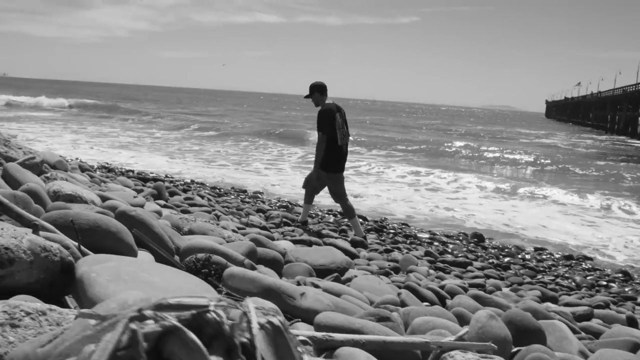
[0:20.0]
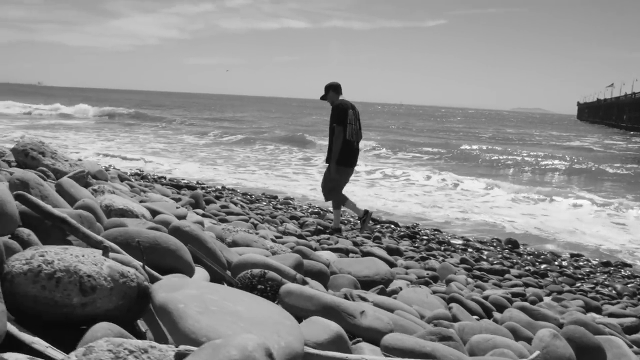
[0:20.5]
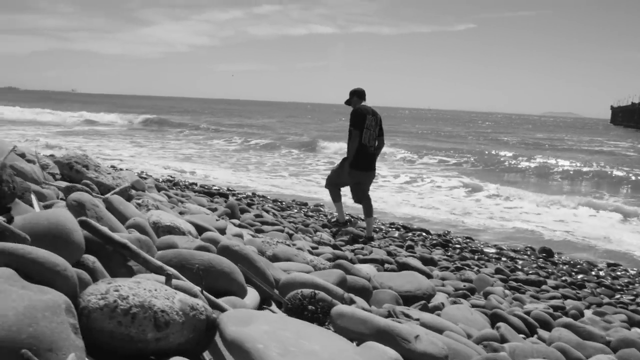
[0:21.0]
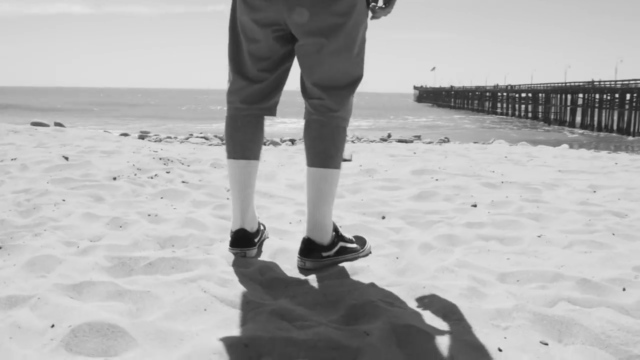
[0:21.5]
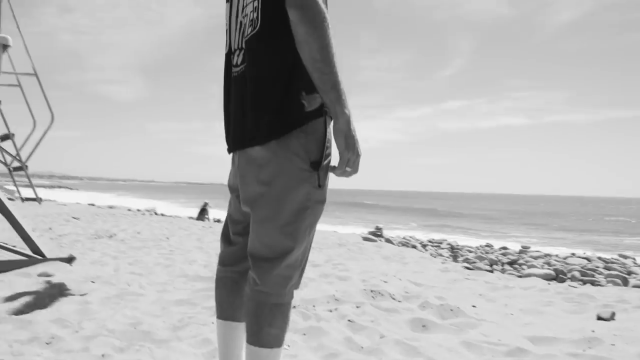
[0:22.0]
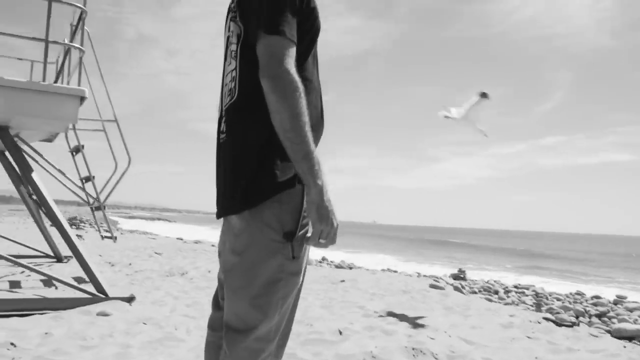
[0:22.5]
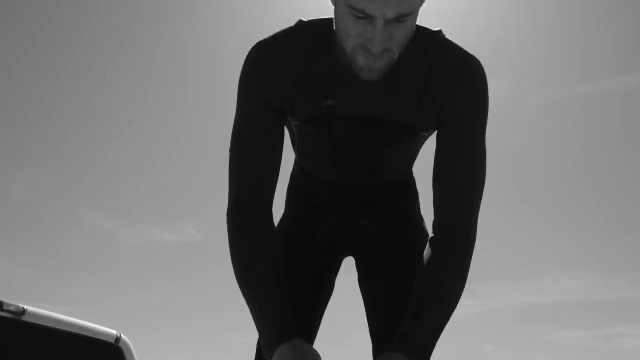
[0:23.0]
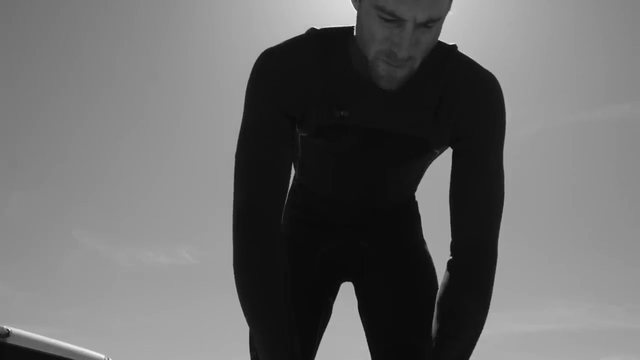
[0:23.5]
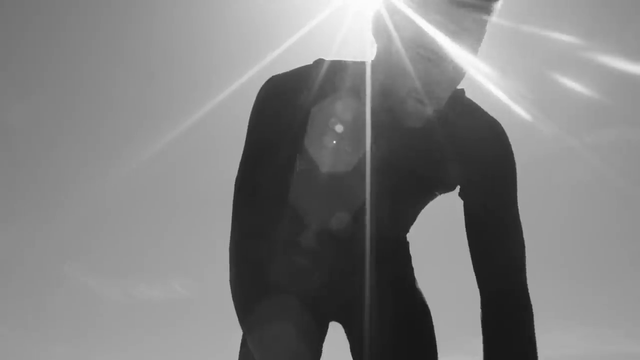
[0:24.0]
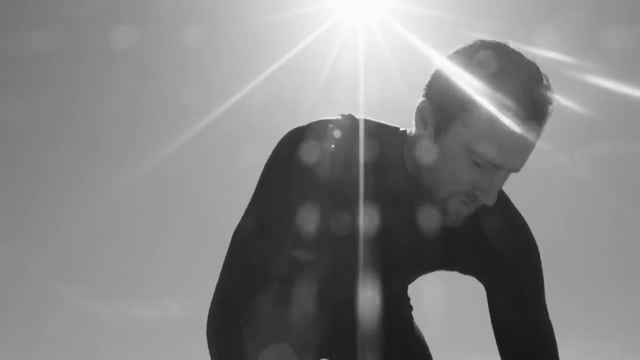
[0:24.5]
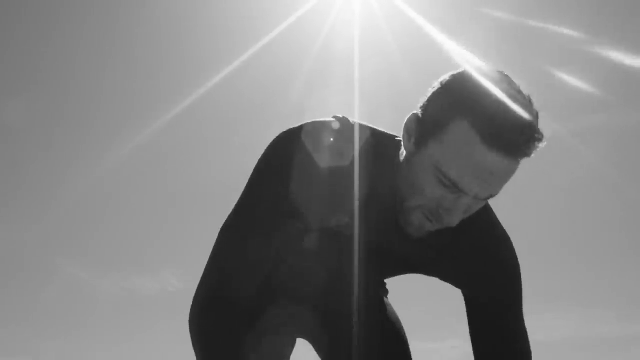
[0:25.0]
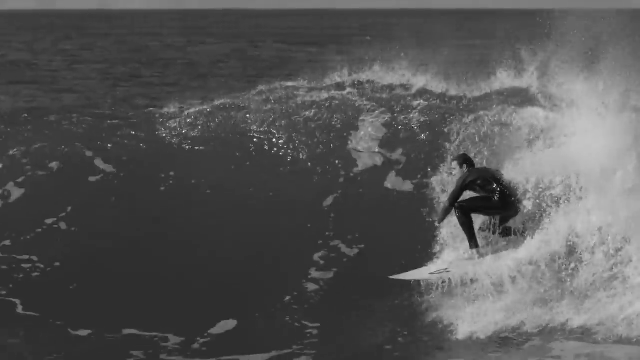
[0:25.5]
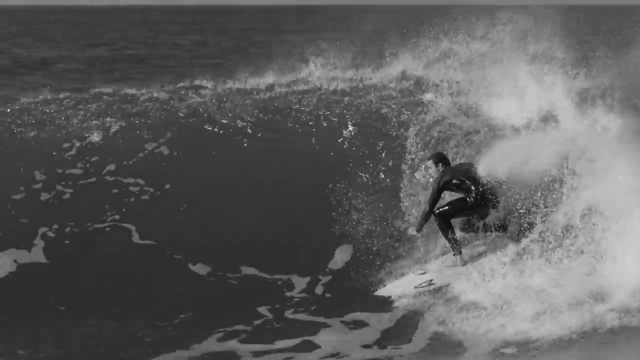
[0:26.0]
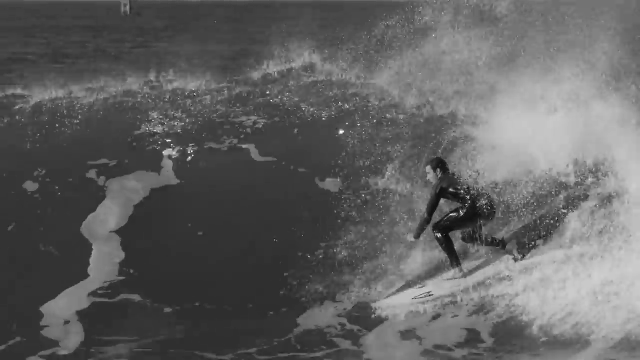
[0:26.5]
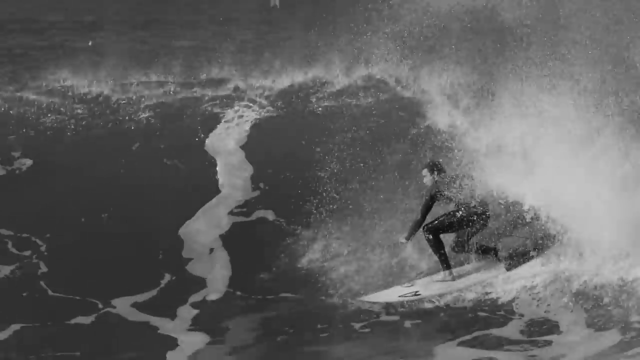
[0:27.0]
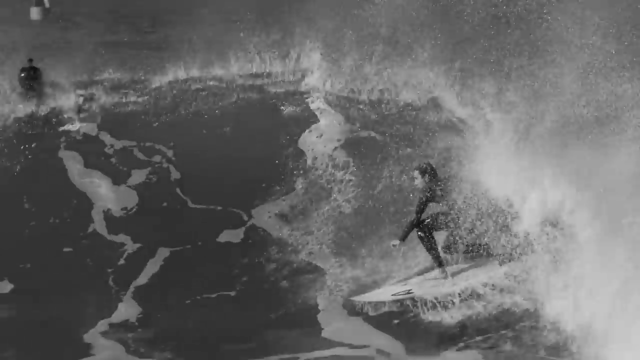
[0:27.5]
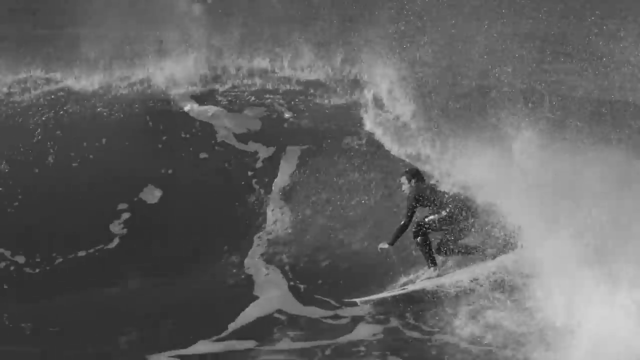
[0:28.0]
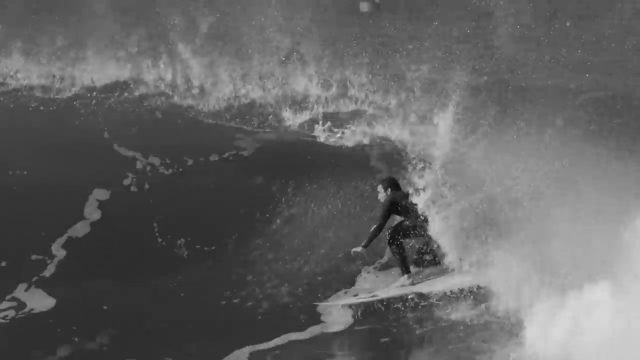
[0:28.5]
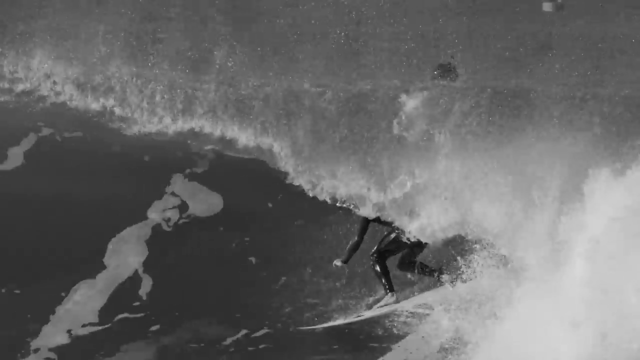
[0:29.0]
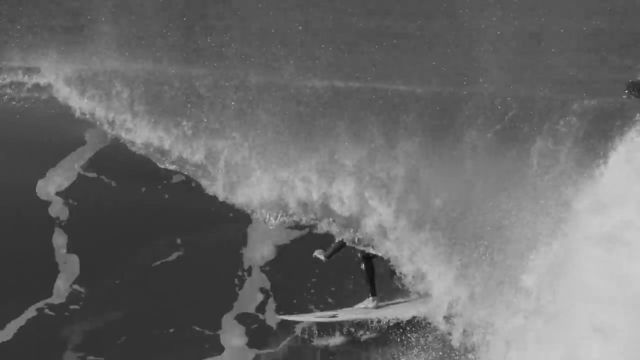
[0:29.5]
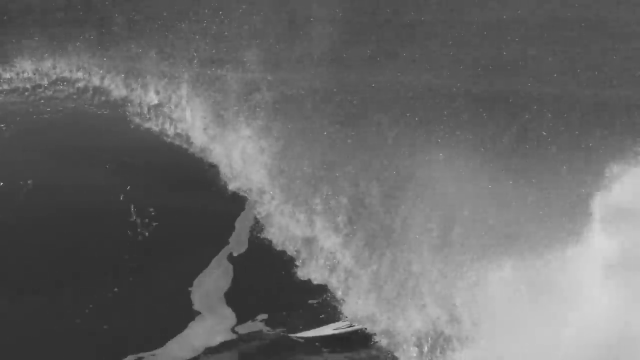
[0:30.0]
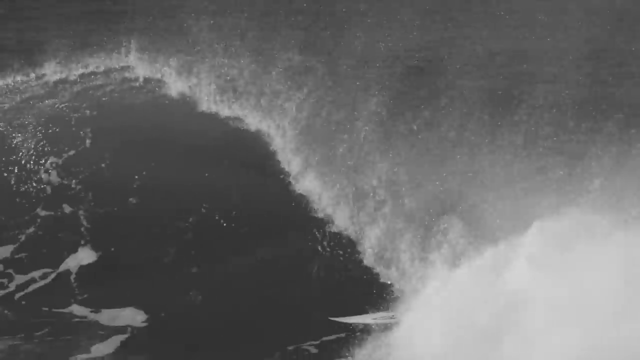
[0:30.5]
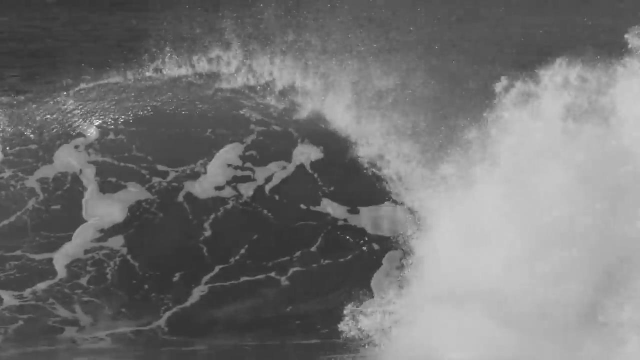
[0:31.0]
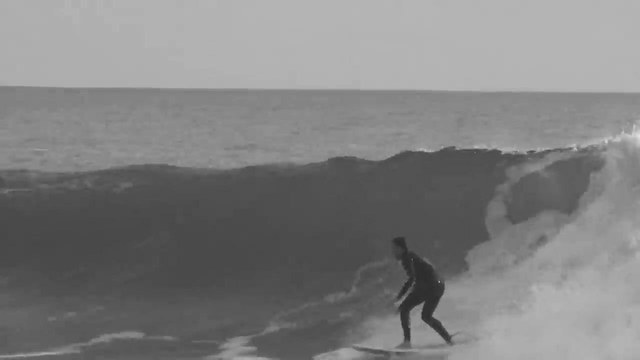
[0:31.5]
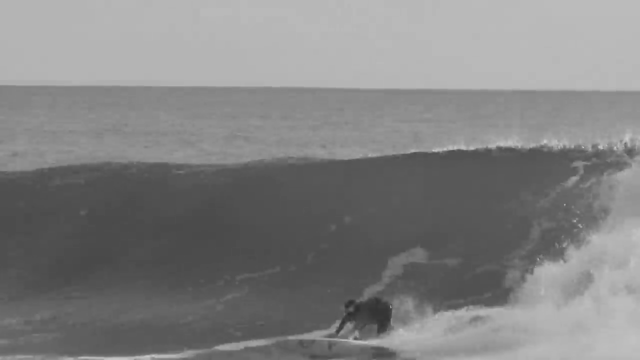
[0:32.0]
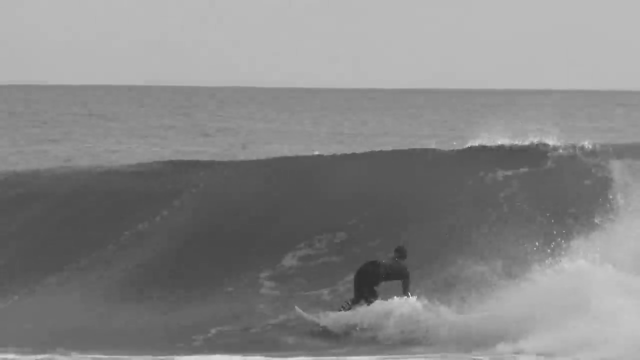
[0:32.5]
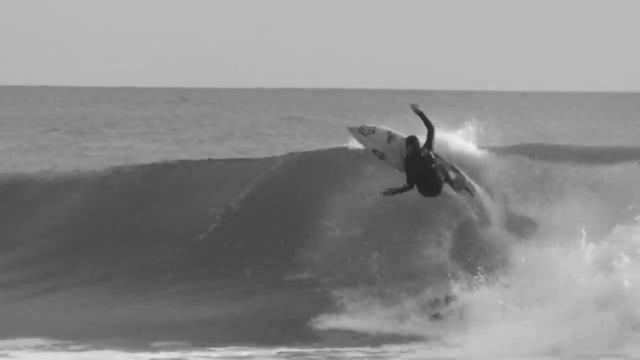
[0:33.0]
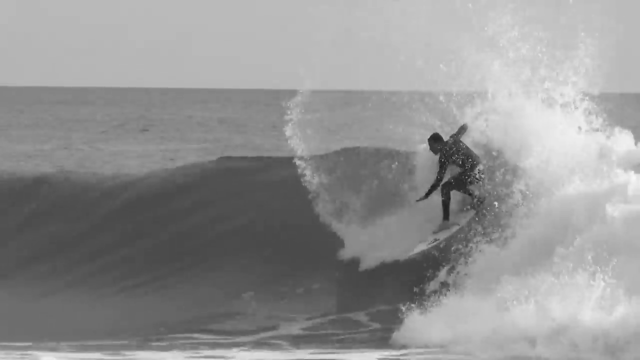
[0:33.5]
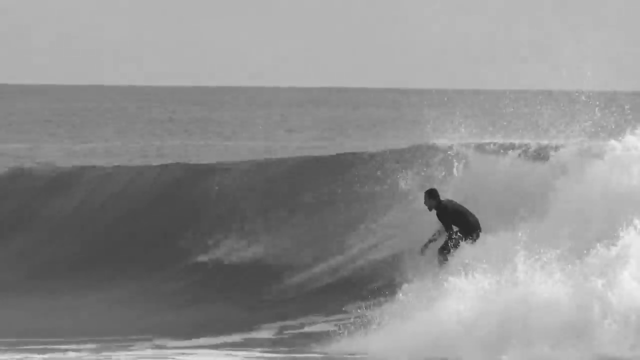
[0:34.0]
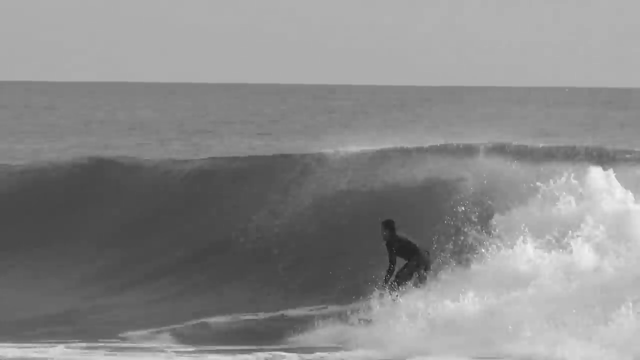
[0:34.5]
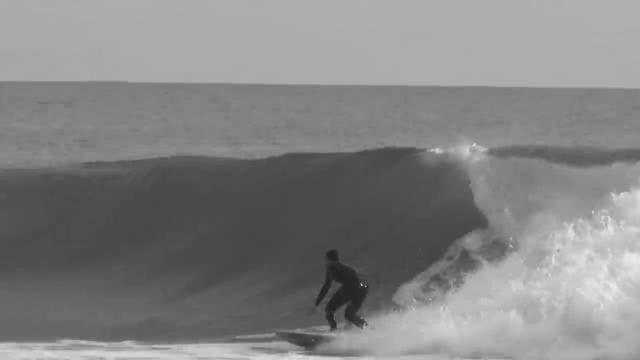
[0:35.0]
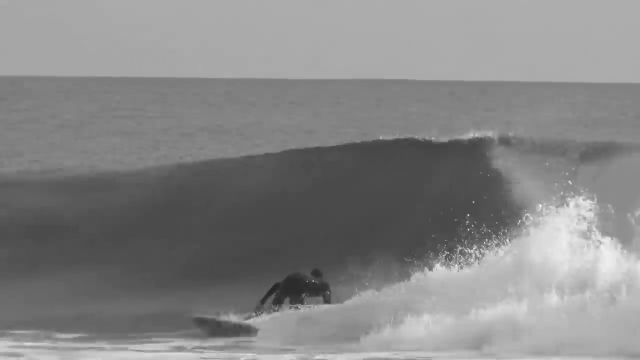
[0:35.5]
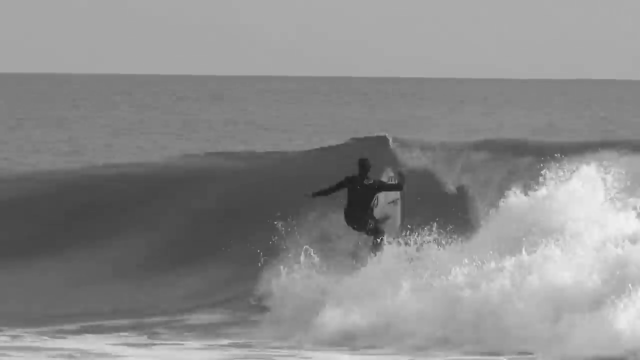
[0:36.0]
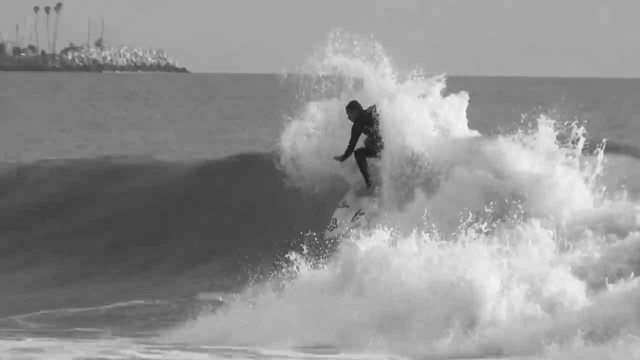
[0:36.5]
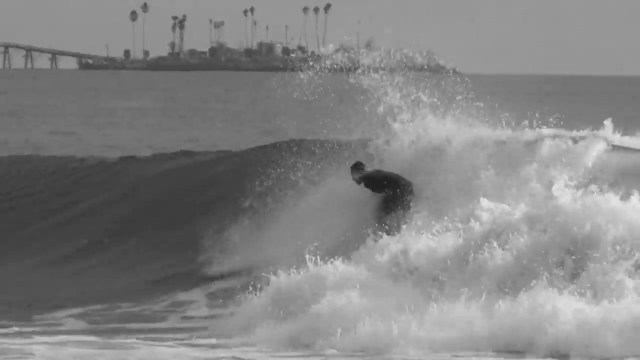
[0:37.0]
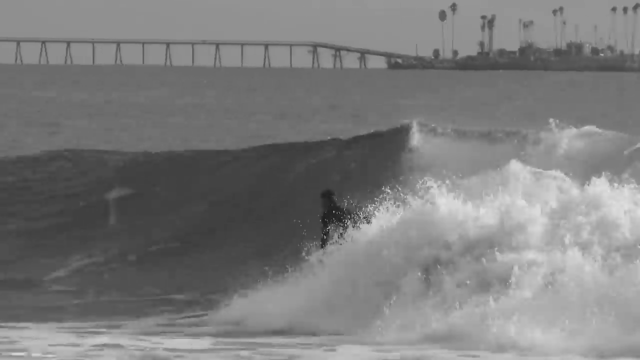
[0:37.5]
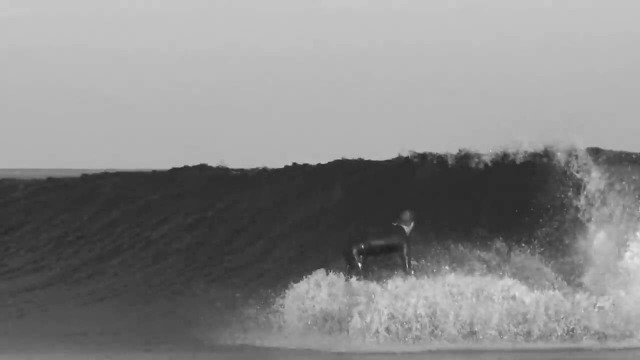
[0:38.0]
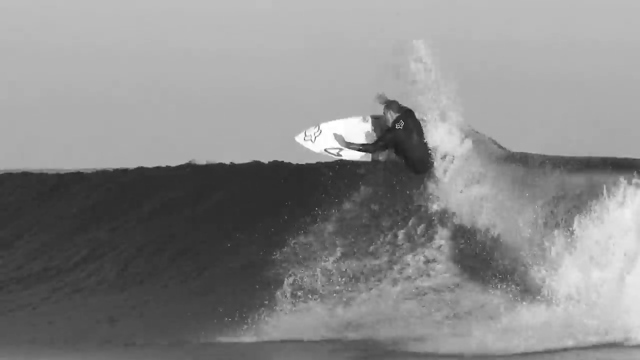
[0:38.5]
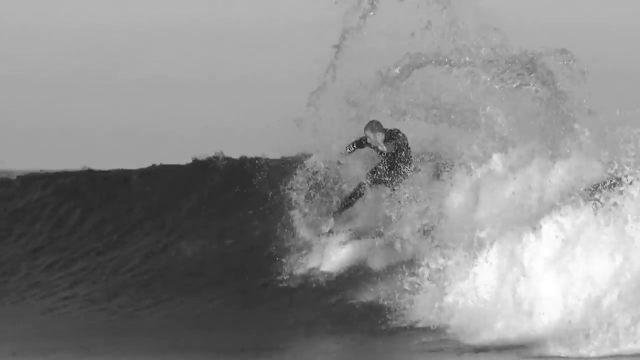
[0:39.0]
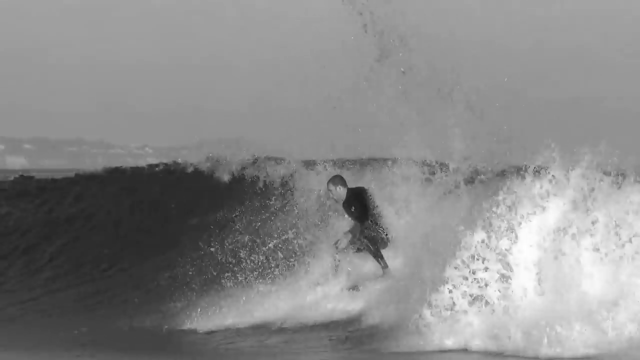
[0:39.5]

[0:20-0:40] A man walks on a rocky beach covered in rocks and boulders ranging from a few inches to a foot long. The camera is low to the ground, so the rocks are seen up close in the lower left part of the screen. The man wears shorts, a dark t-shirt, a baseball cap, sneakers, and socks pulled up to the calf. With his hands in his pockets, he walks along the shore as the waves crash on the other side of him. The video shows the man's Vans shoes, then his shorts, with someone sitting on the beach in the distance and a lifeguard tower on the left. A seagull flies by. The man, now changed into a long-sleeved wetsuit, is bending over. Then he is in the water riding a surfboard on a wave about seven to nine feet tall. He is crouched on the board riding the curl, his left foot forward in a 90-degree bend, his left arm forward for balance, and his right leg on the back part of the board. As he rides, he rubs his right hand against the wave, making a little splash, then rides the curl and disappears behind it. In the next shot he rides the open part of the wave, turns, rides up the wave and cuts back at the tip, doing this once, twice, and a third time, when he flips the board around 180 degrees.